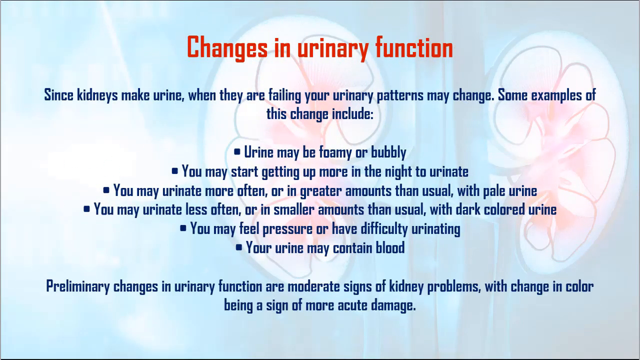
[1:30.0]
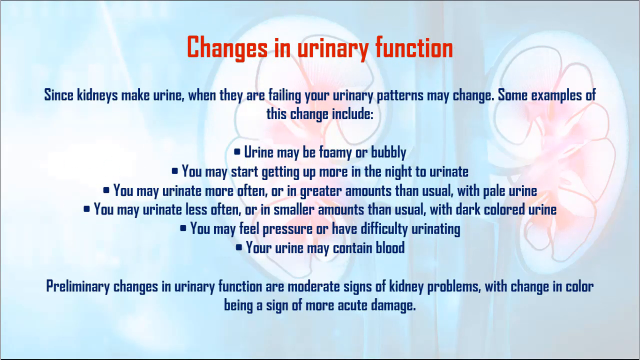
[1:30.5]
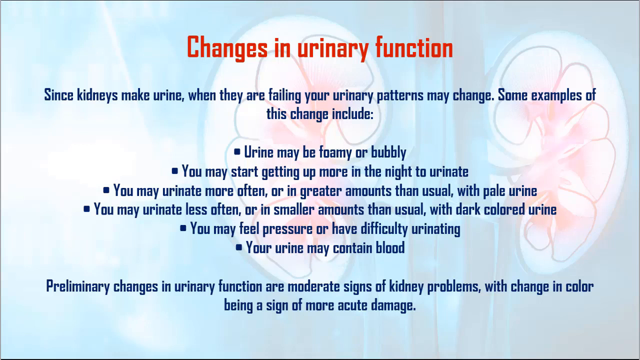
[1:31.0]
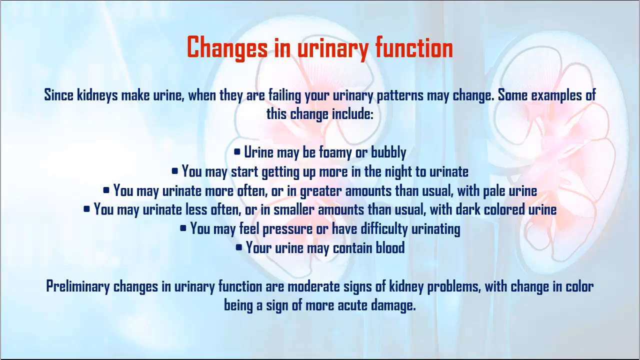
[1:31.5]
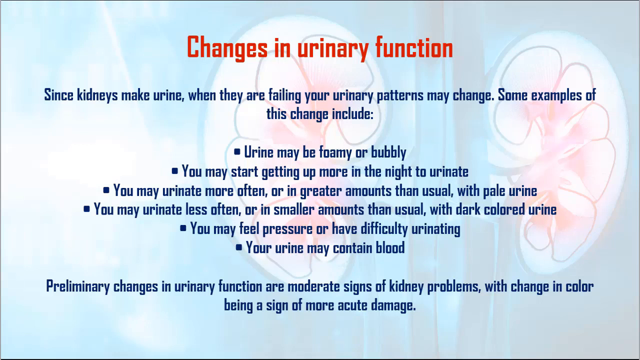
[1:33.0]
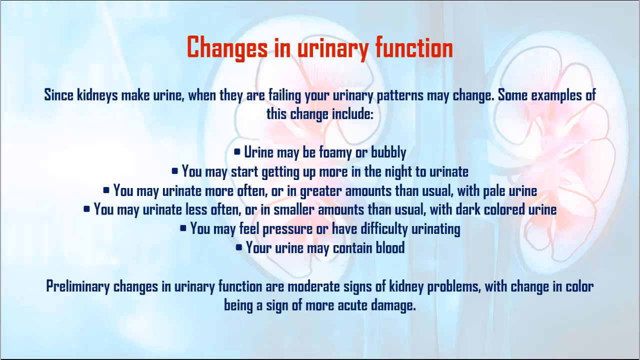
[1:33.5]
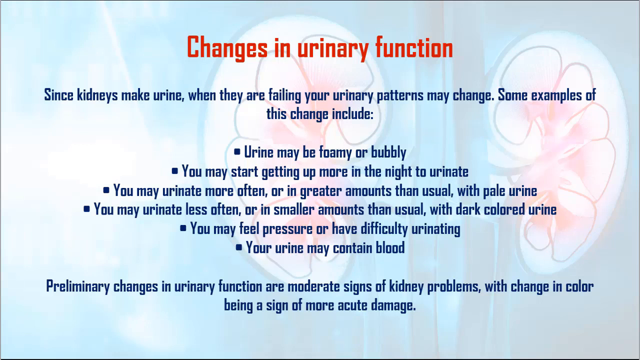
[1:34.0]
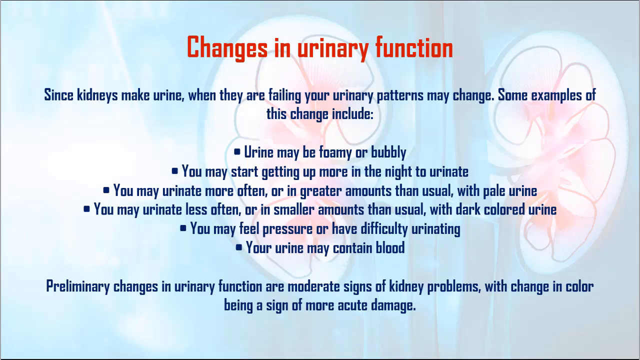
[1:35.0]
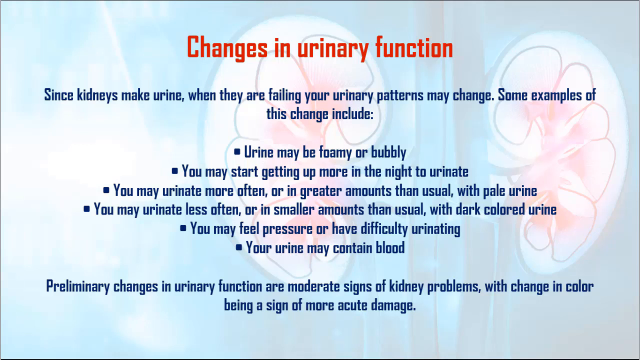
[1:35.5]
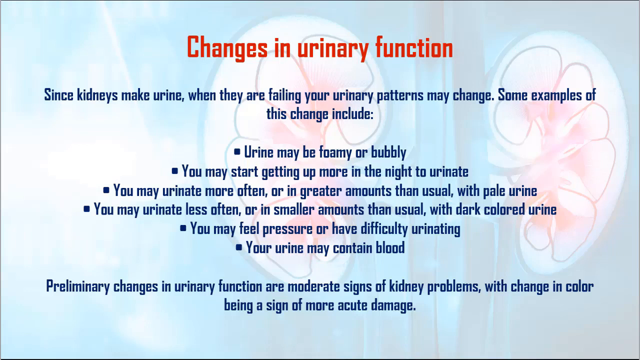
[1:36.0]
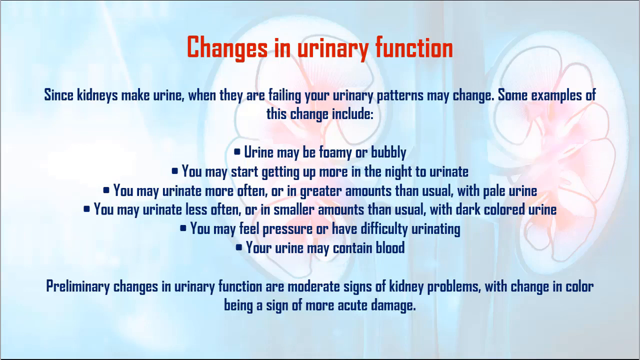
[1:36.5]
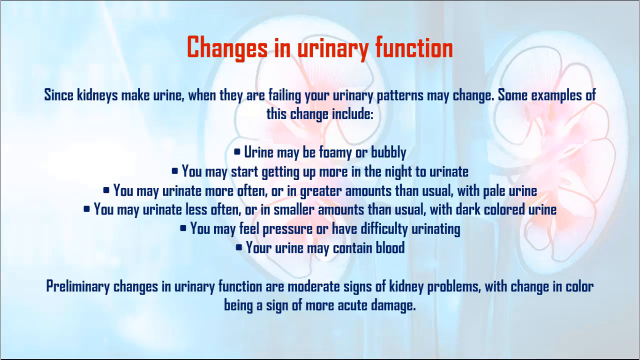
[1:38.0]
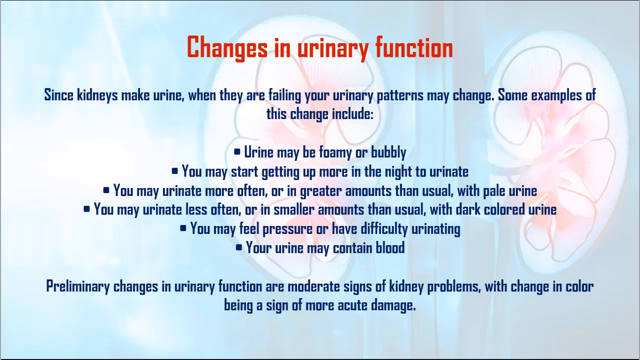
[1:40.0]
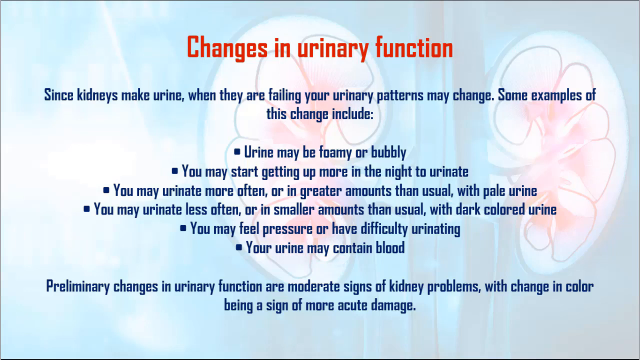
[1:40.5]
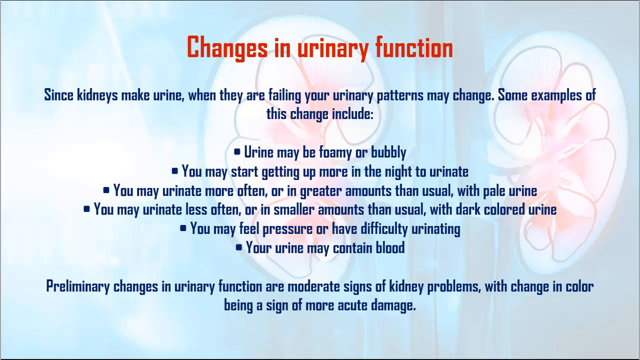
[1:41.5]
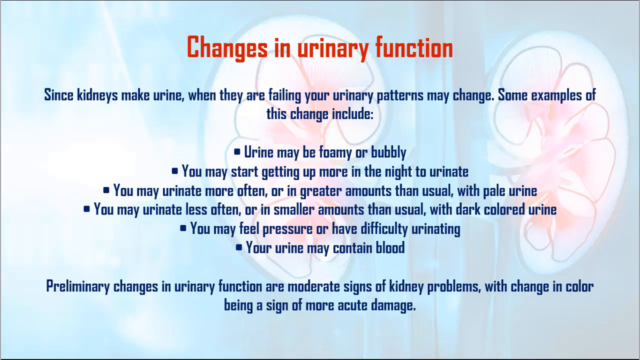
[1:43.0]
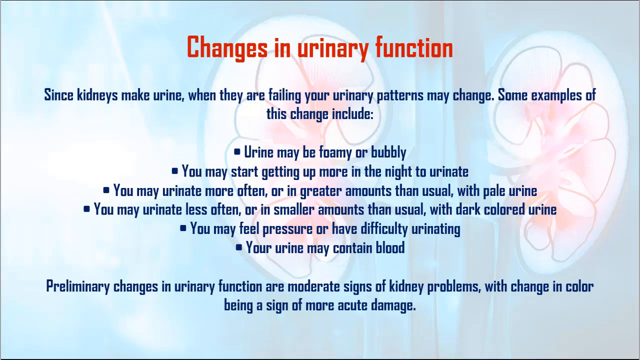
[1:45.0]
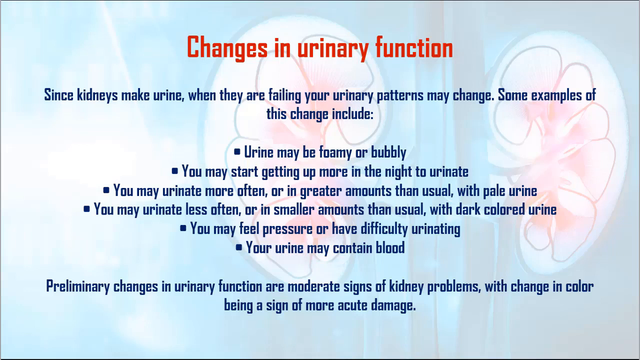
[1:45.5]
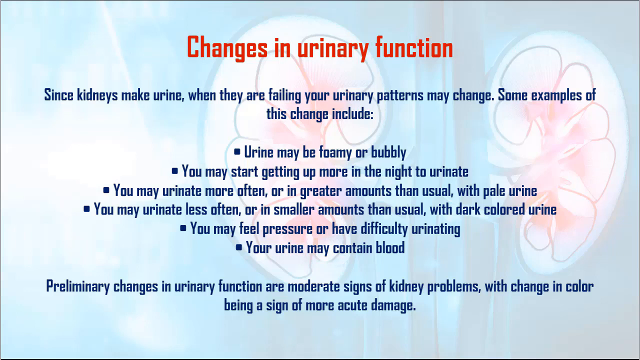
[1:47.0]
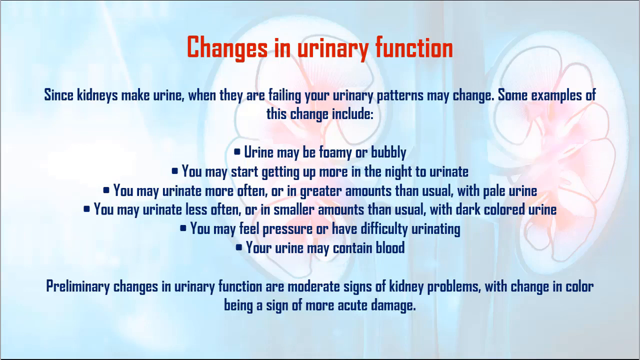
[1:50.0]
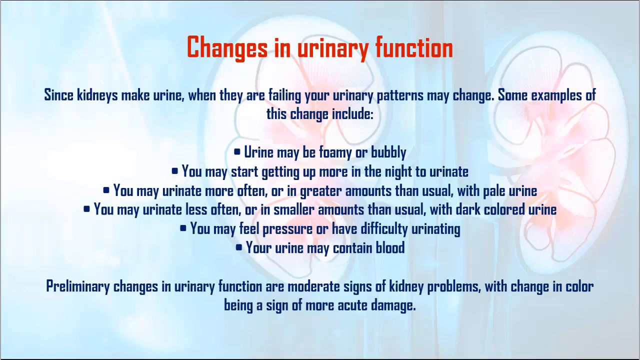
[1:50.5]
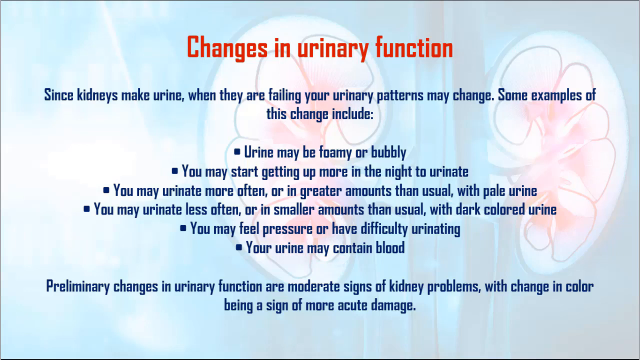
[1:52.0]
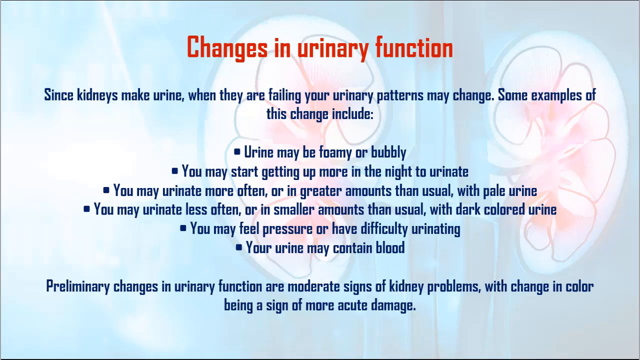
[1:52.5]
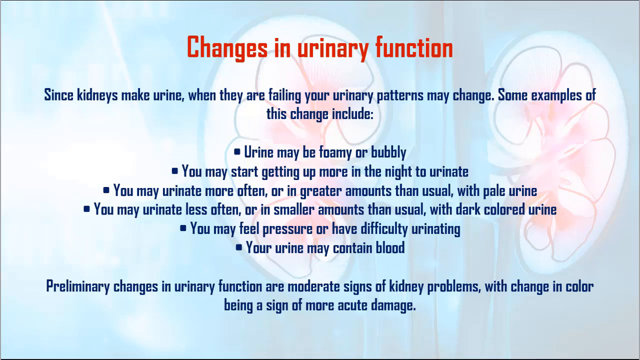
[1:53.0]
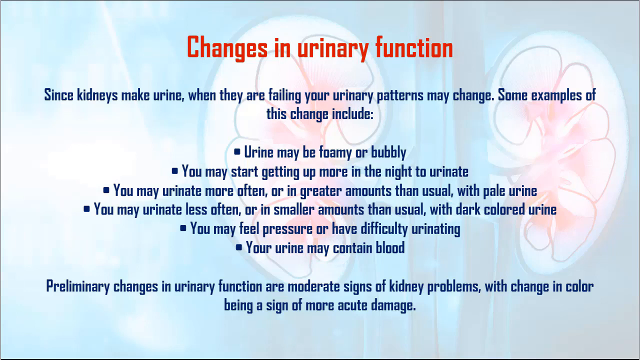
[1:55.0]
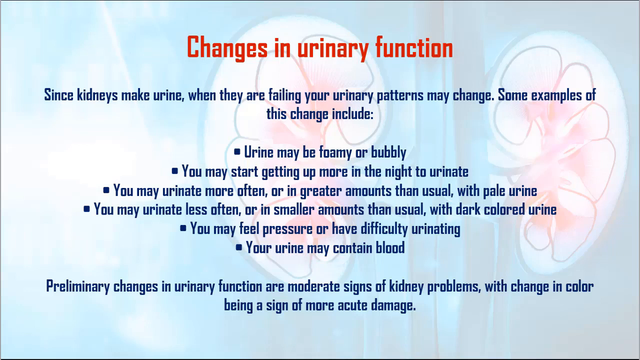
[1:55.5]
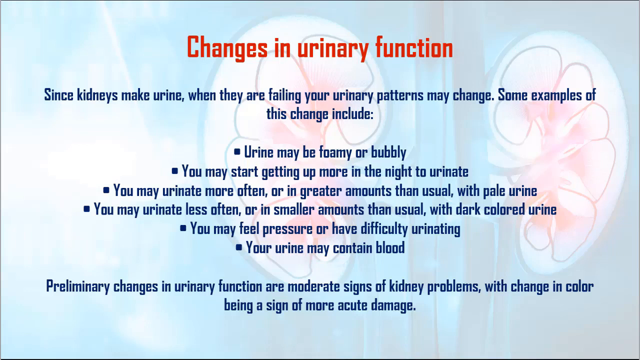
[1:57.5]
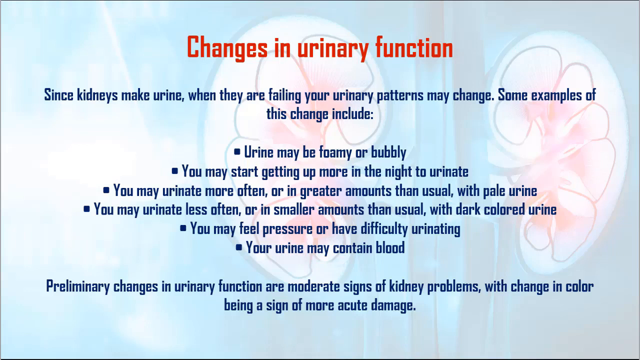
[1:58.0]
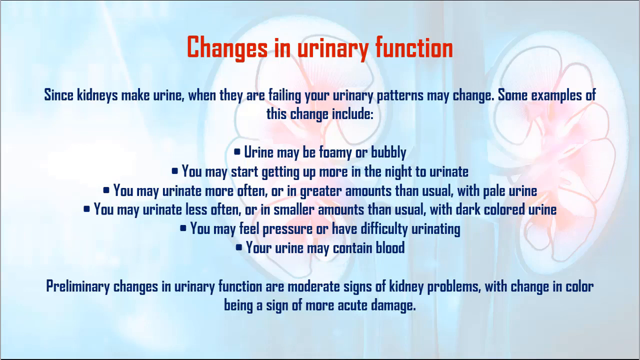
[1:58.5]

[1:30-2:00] A slide with a mostly blue-black background, slightly mixed with white, shows a drawing of two white kidneys with two mostly blue tubes in the center. The kidneys have tiny ovals drawn inside them, with areas of pink inside the ovals. The screen shows information about how changes in urinary function can be symptoms of kidney damage, with about five or six bullet points in the center about urine and bathroom habits that could be symptoms of kidney damage. The screen does not change for the rest of the video segment. Directly below the red title "changes in urinary function", a sentence states: "since kidneys make urine when they are failing, your urinary patterns may change. Some examples of this change include", followed by five bullet points. At the bottom of the screen, a sentence states: "preliminary changes in urinary function are moderate signs of kidney damage, with change in color being a sign of more acute damage."